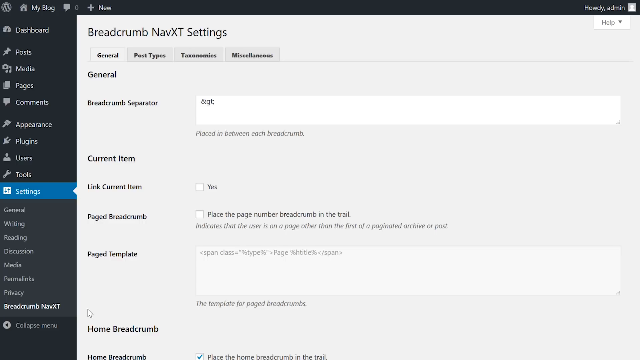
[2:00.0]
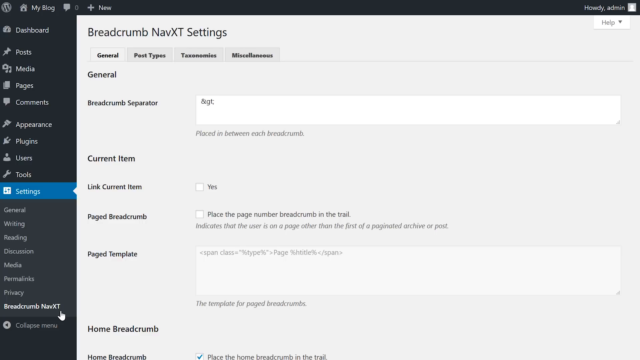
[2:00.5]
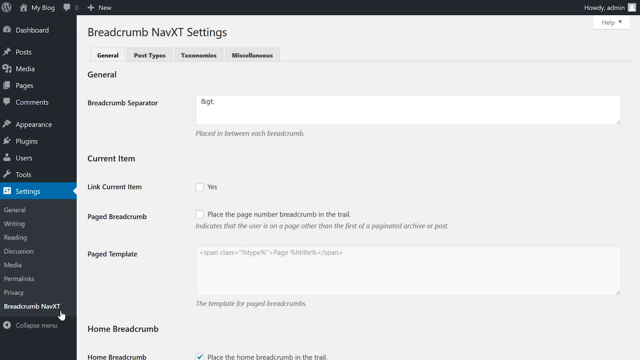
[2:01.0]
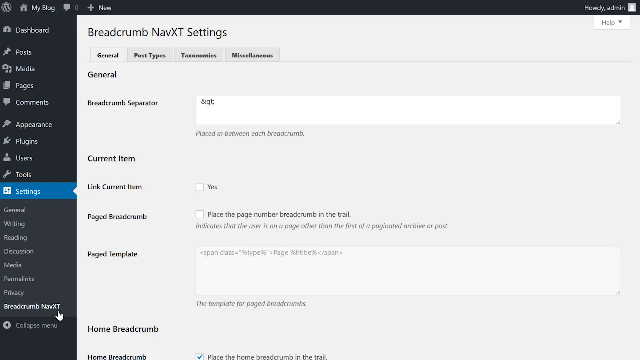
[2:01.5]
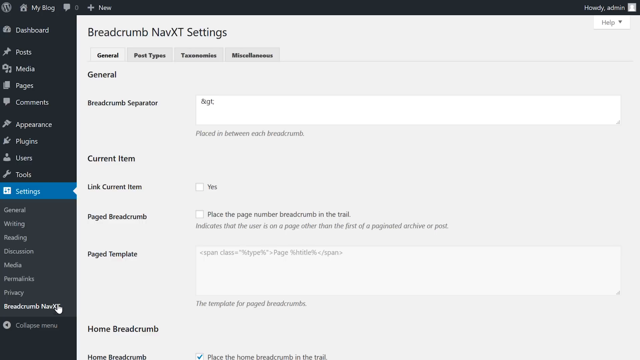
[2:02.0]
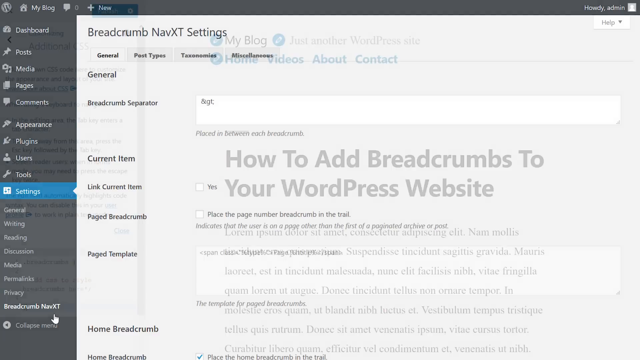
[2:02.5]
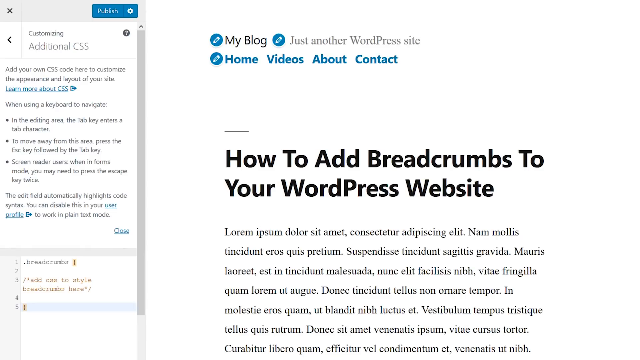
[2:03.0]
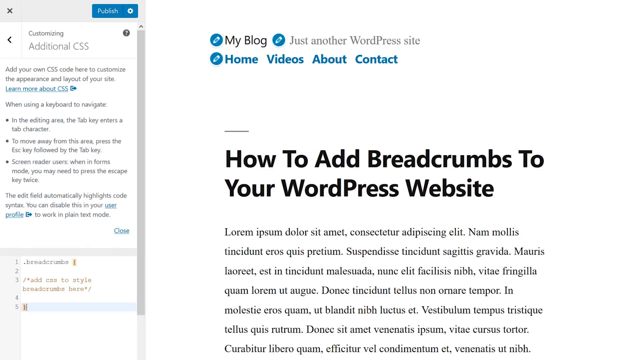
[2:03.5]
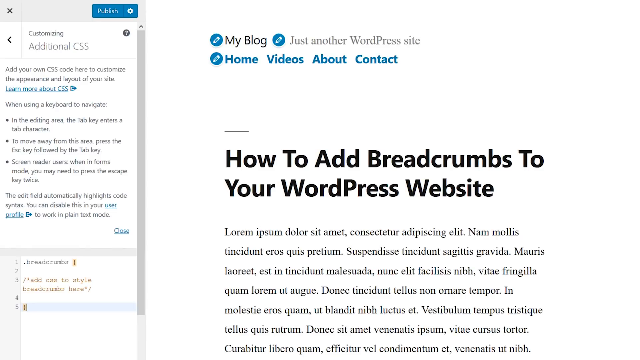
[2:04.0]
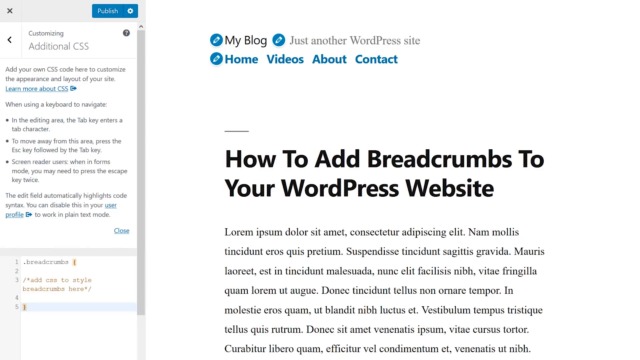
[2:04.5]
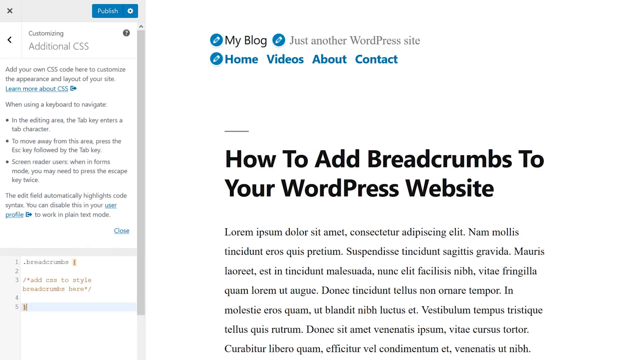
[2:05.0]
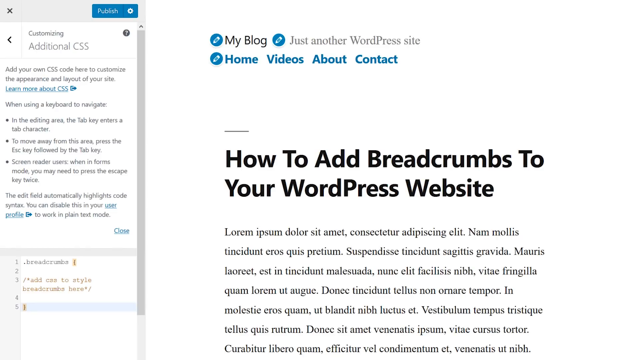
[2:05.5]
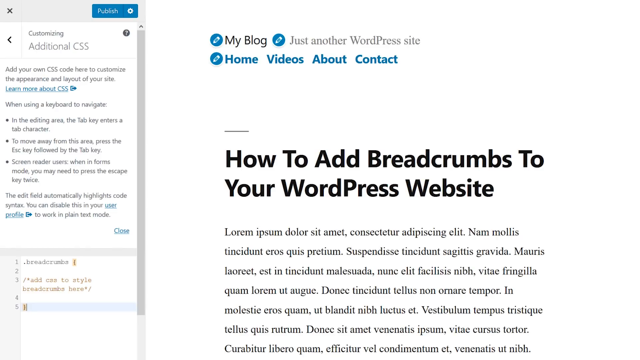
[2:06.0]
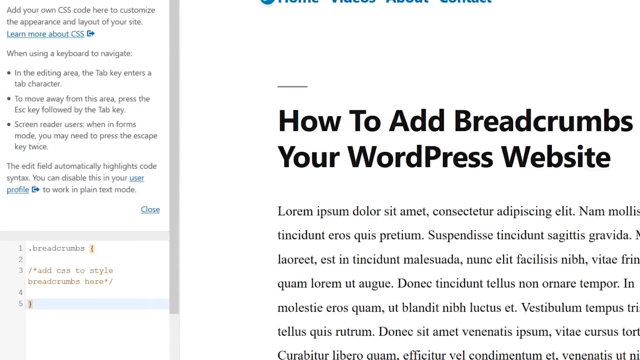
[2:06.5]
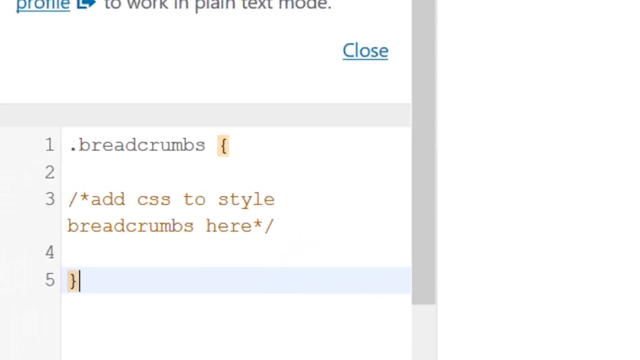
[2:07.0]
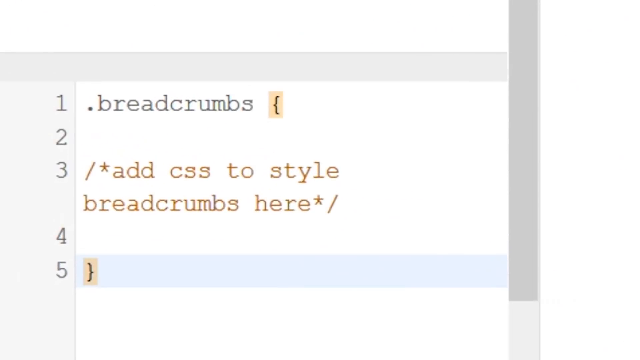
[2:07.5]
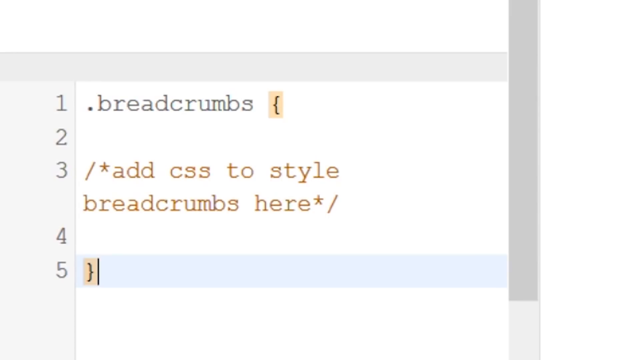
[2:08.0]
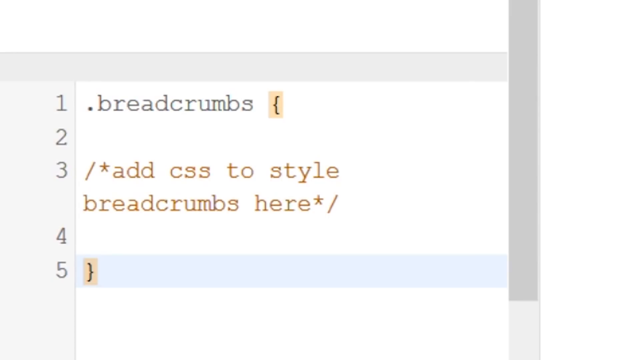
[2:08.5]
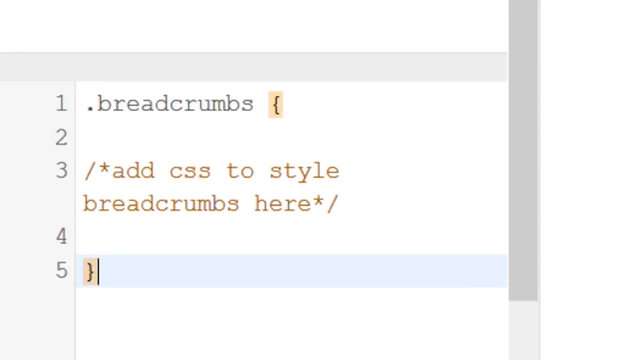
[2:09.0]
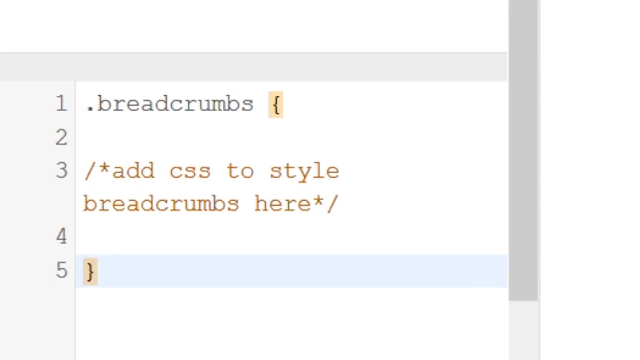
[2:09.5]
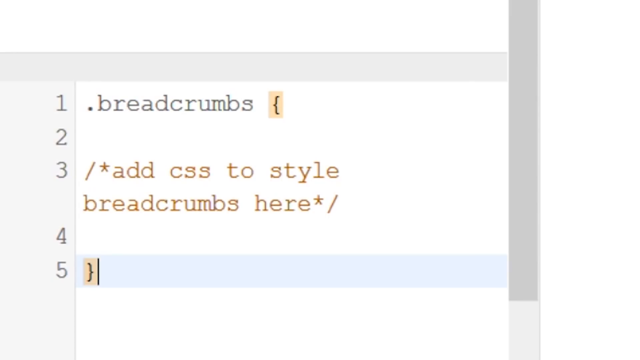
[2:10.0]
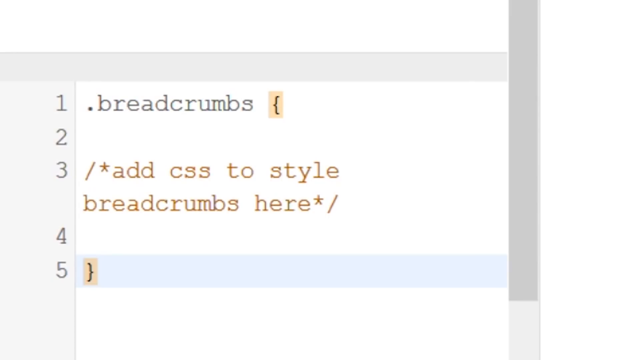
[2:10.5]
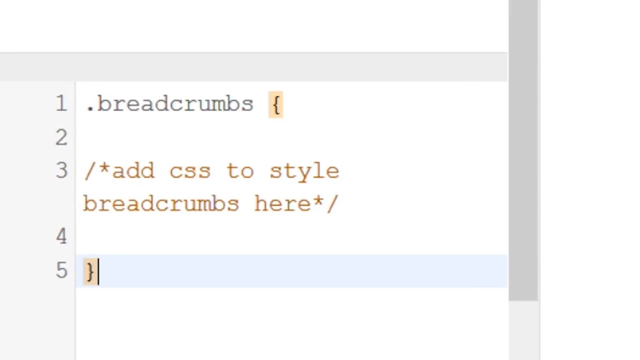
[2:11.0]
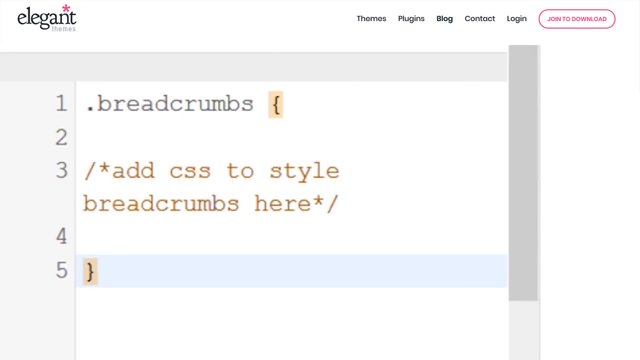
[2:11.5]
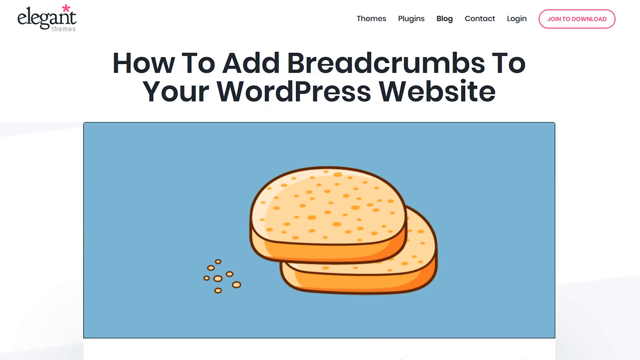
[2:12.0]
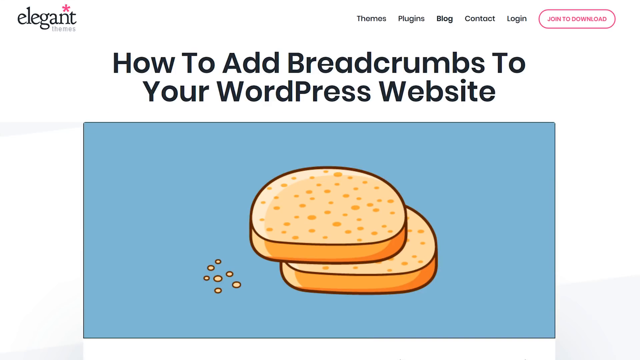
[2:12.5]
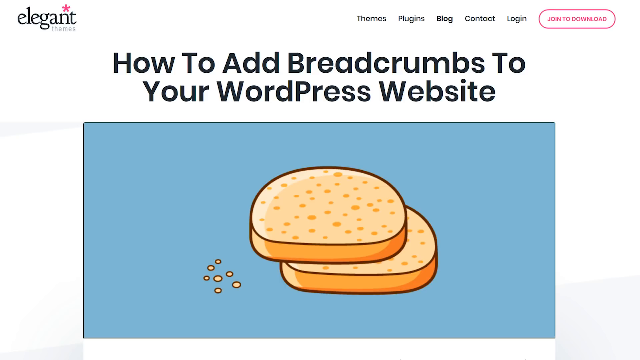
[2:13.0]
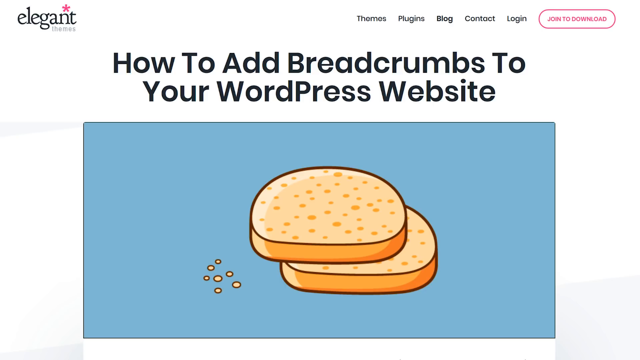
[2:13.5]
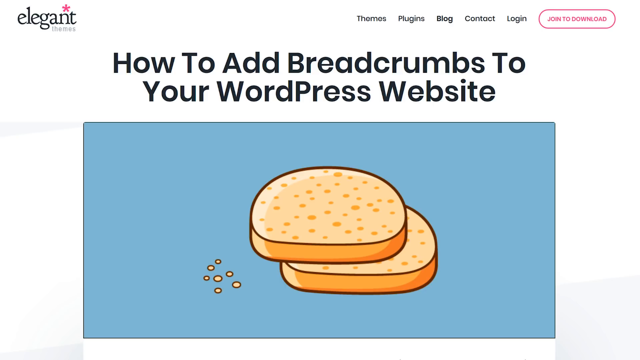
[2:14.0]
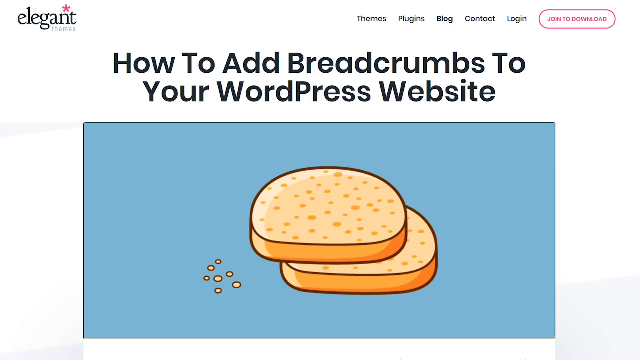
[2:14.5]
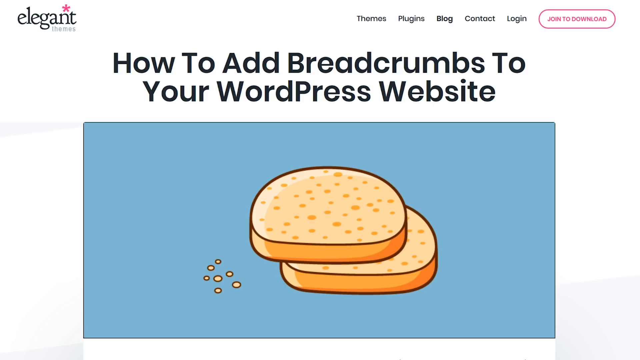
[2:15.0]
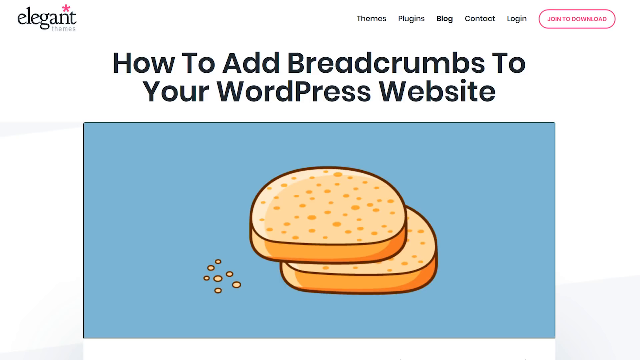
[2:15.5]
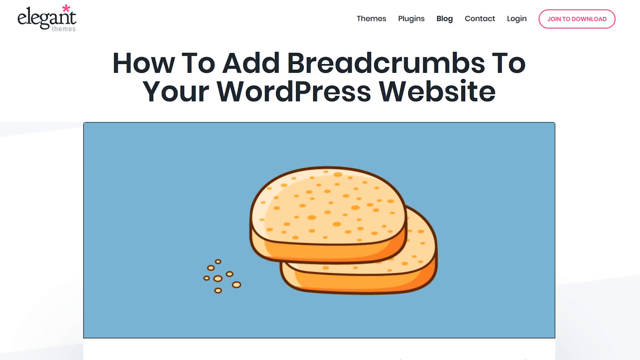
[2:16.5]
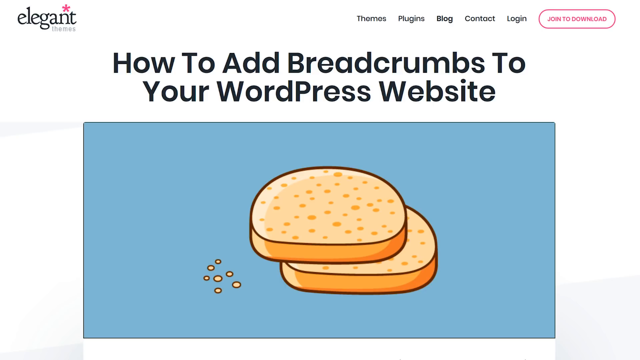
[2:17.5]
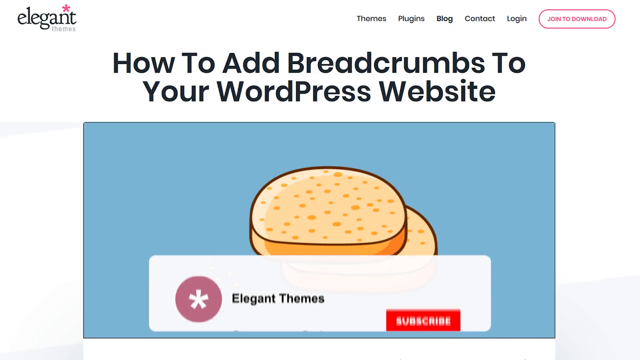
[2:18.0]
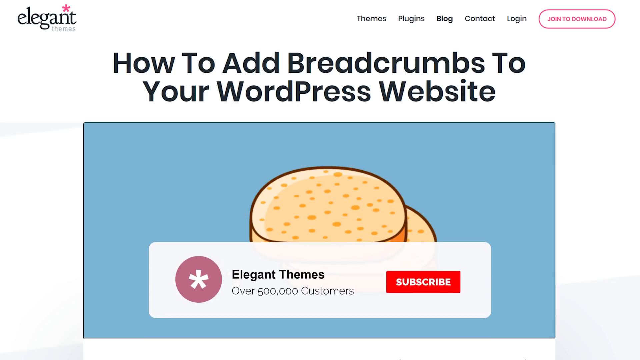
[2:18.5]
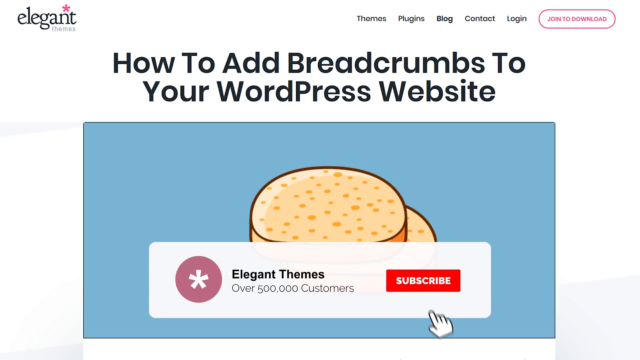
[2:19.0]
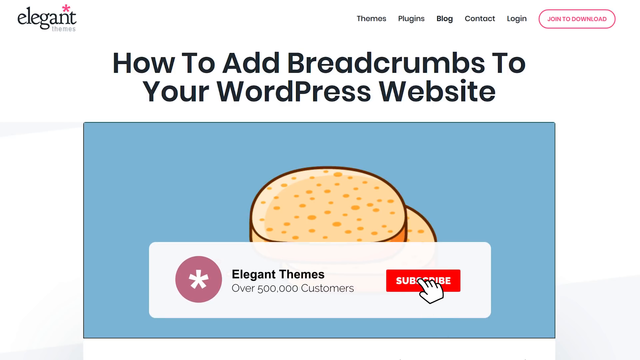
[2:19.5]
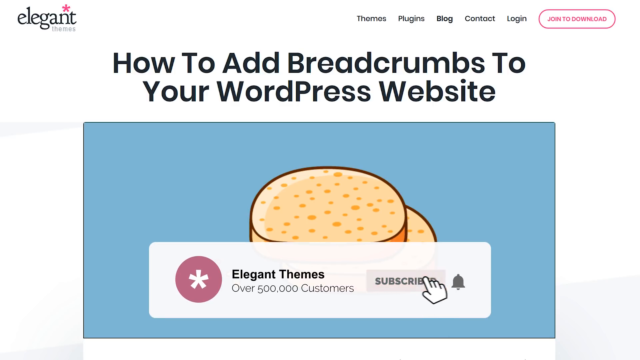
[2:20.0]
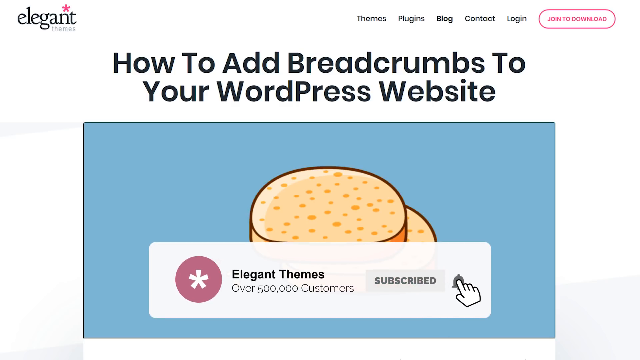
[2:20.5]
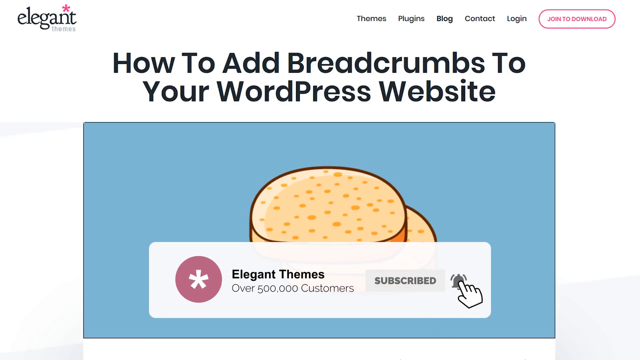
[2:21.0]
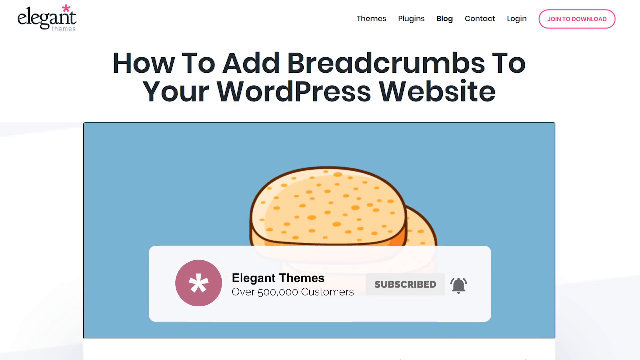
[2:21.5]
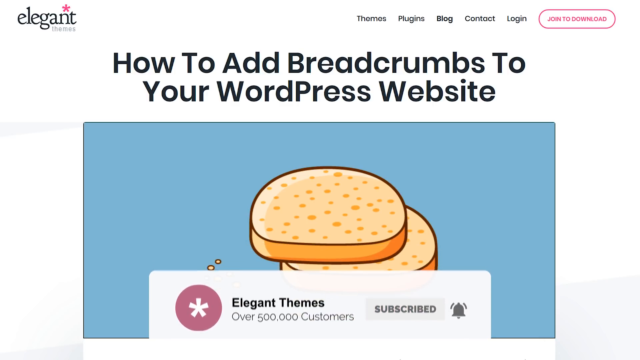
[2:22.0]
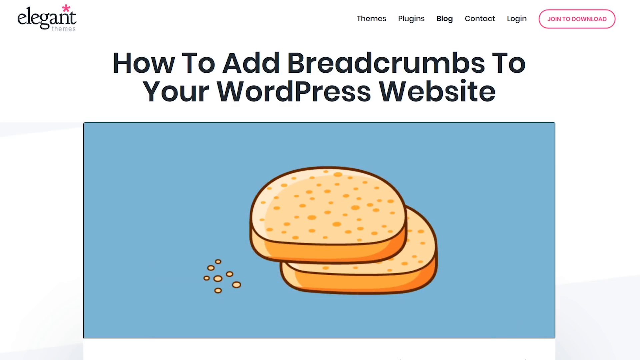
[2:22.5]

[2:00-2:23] The Settings tab shows the Breadcrumb NAVXT settings, with all the different options listed. The screen fades over to My Blog, still in the editing section for the blog, and the user zooms into the bottom left, showing the code of the Breadcrumbs plugin. The video then transitions back to the original screenshot of the website showing how to add breadcrumbs to a WordPress website, with Themes, Plugins, Blog, Contact, Login and Join to download at the top right, Elegant Themes at the top left, and, in the middle of the screen underneath the header, a cartoon image of two slices of bread with some breadcrumbs beside them on a blue background. A bar with the Elegant Themes name, a note of over 500,000 customers and a subscribe button rises from the bottom of the screen to about halfway above the bread image. A little hand clicks the subscribe button and turns on a notification bell, and the bar with the subscribe button then fades down below the screen.